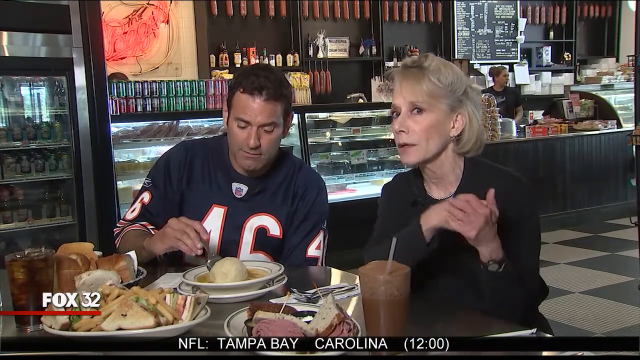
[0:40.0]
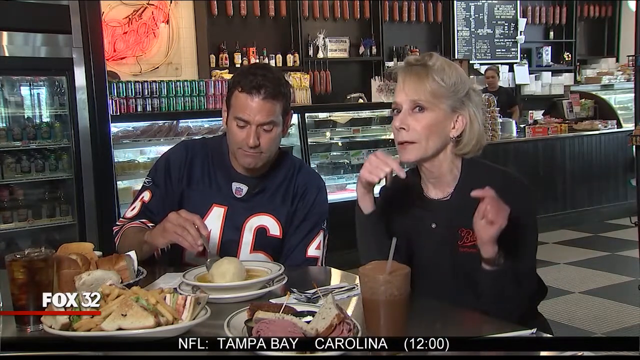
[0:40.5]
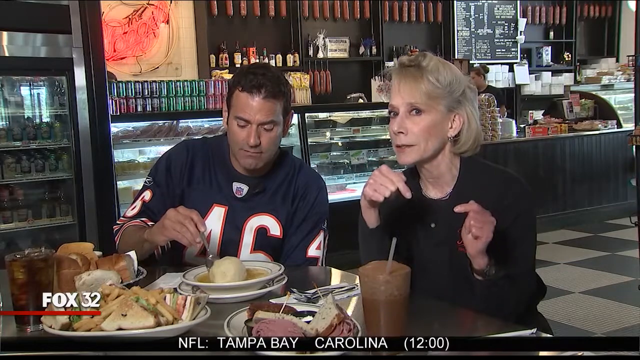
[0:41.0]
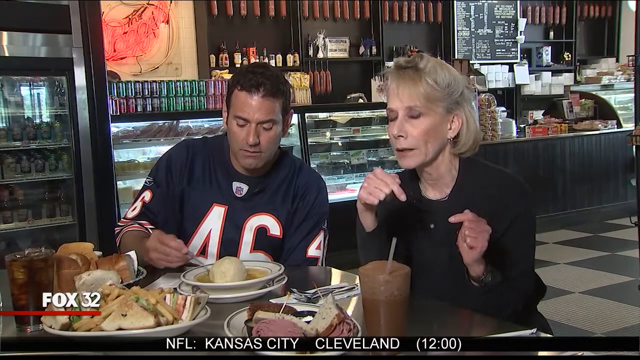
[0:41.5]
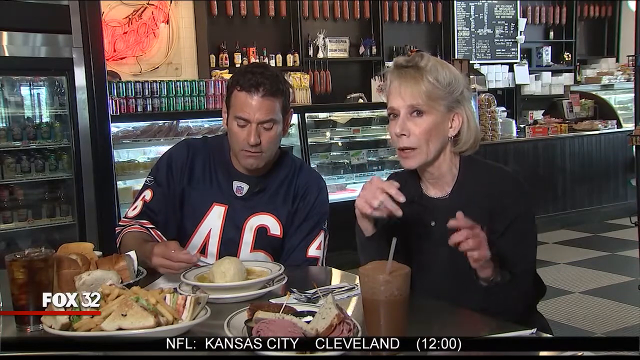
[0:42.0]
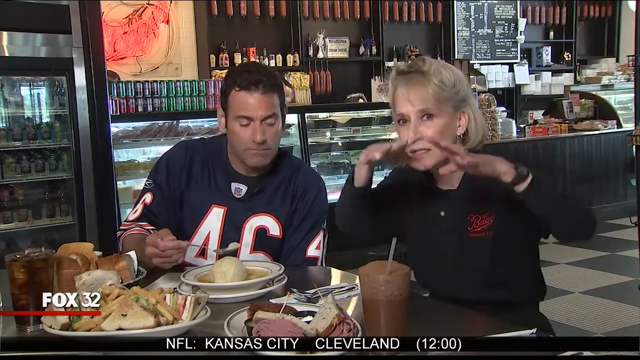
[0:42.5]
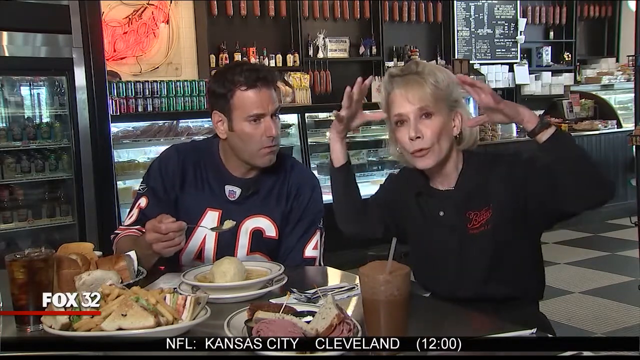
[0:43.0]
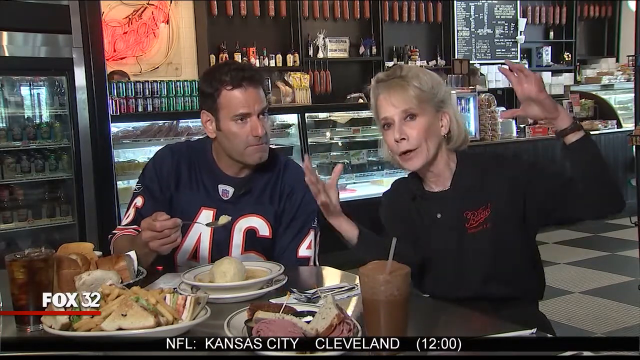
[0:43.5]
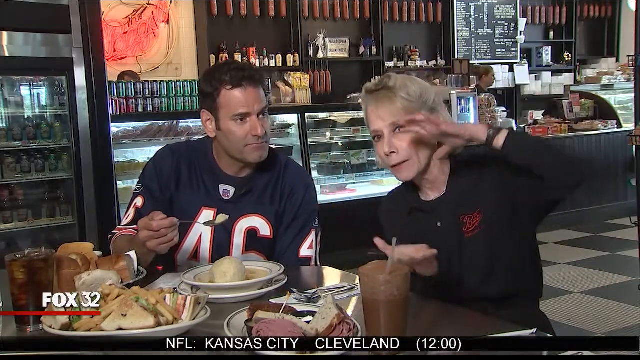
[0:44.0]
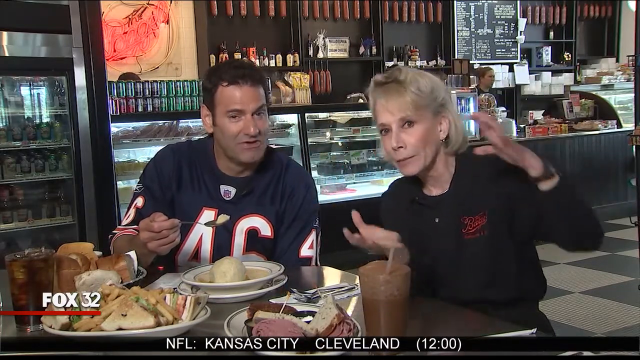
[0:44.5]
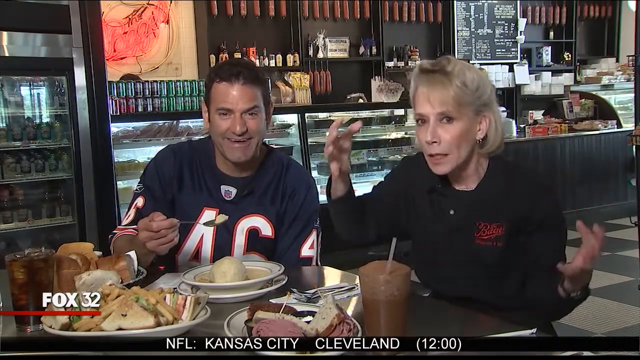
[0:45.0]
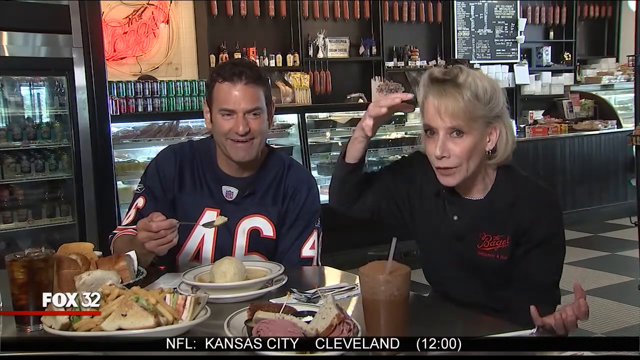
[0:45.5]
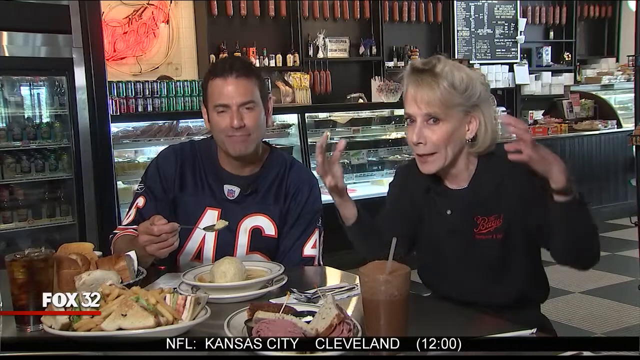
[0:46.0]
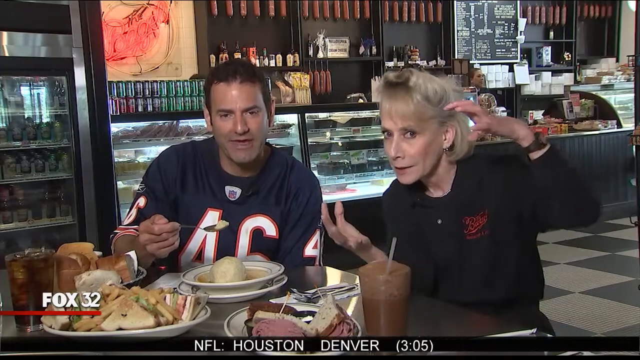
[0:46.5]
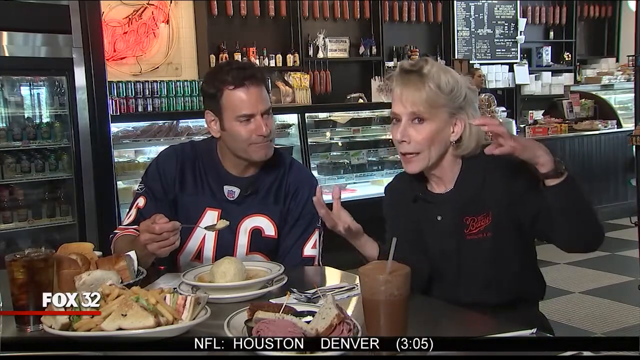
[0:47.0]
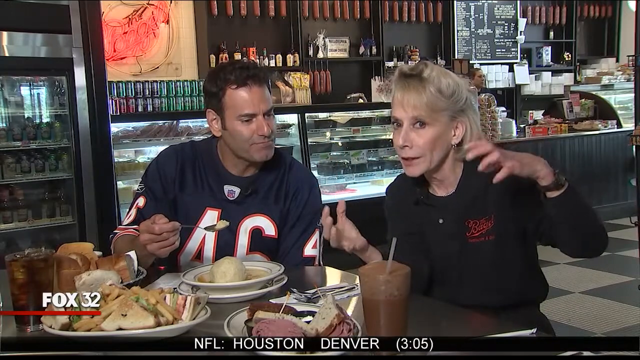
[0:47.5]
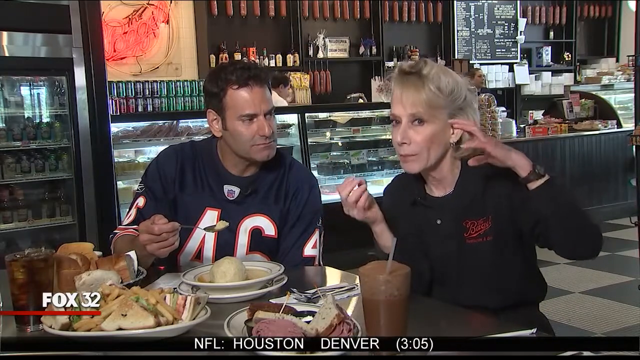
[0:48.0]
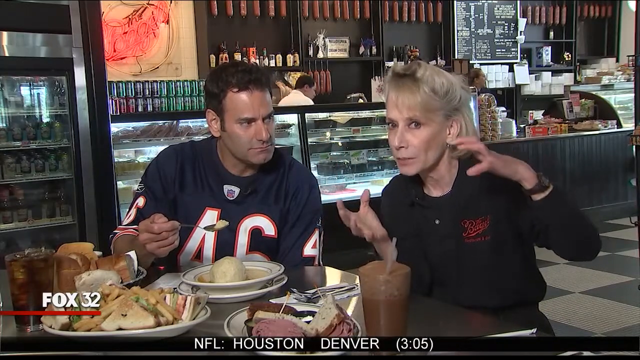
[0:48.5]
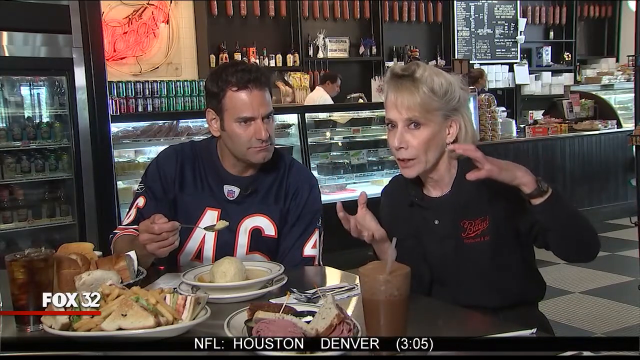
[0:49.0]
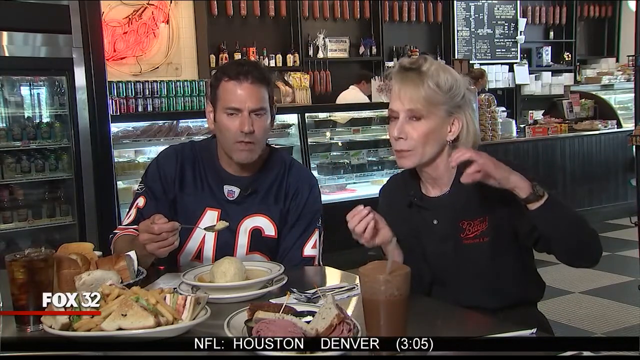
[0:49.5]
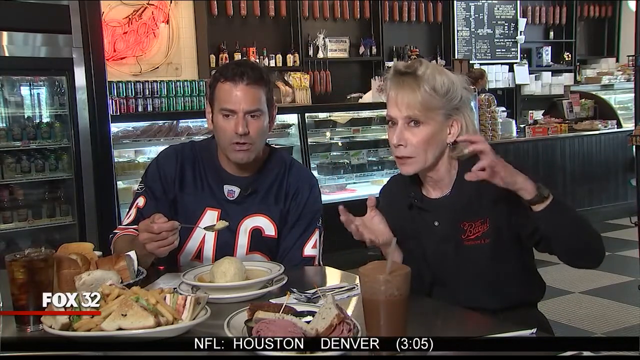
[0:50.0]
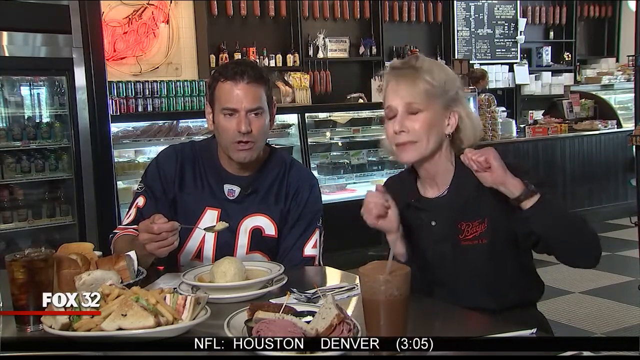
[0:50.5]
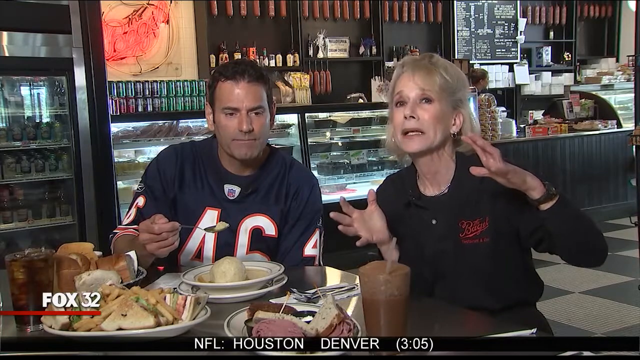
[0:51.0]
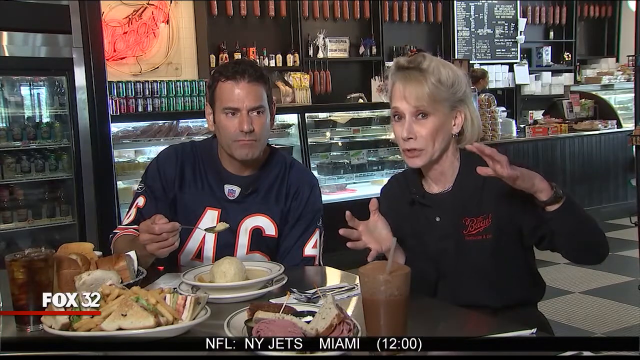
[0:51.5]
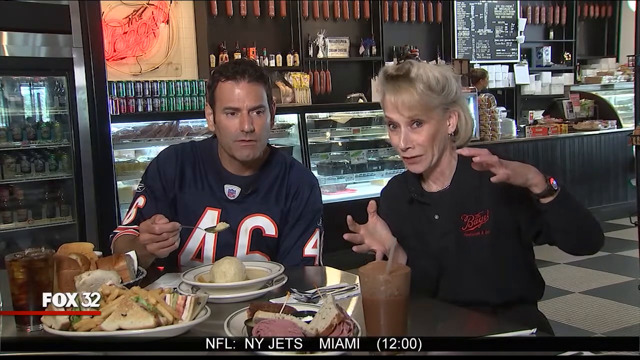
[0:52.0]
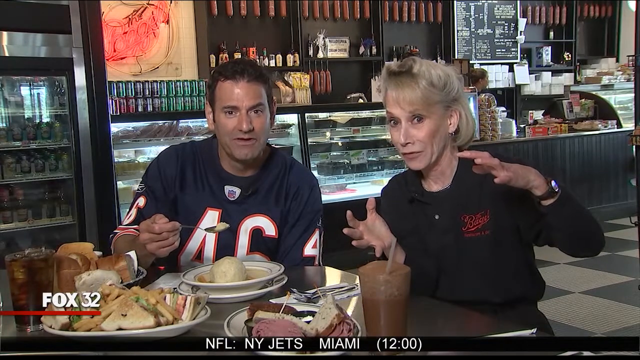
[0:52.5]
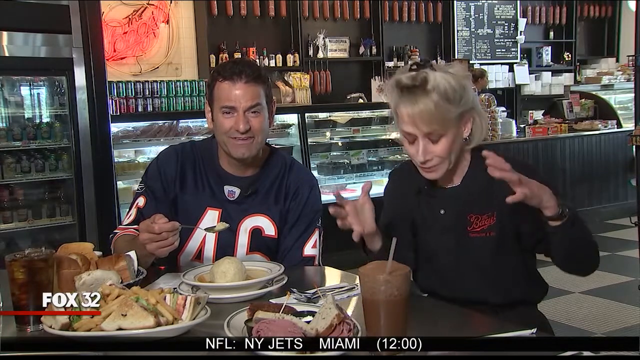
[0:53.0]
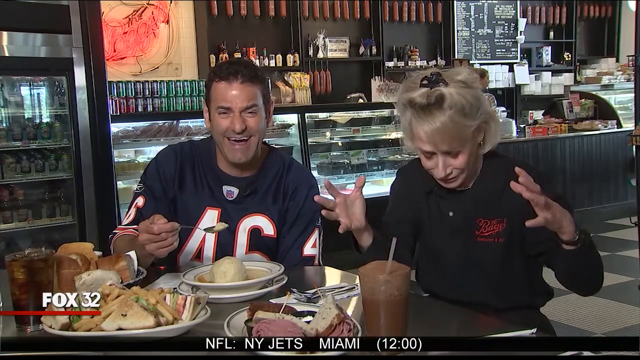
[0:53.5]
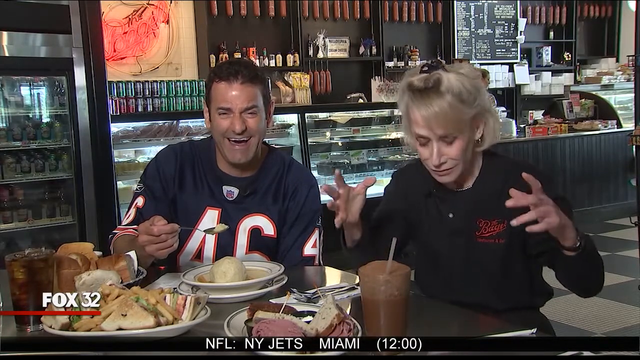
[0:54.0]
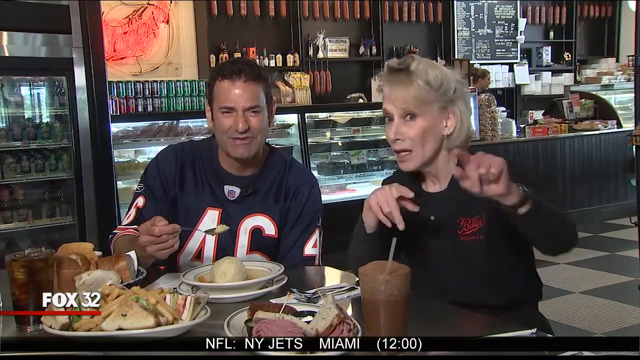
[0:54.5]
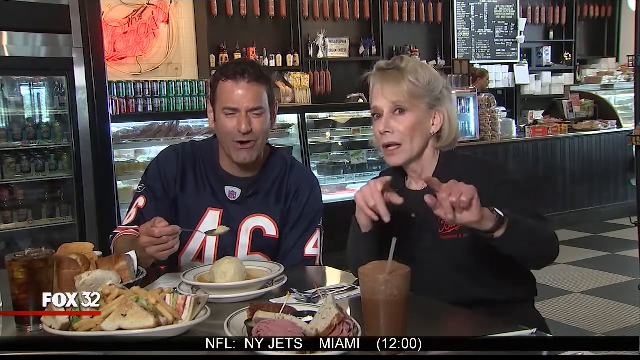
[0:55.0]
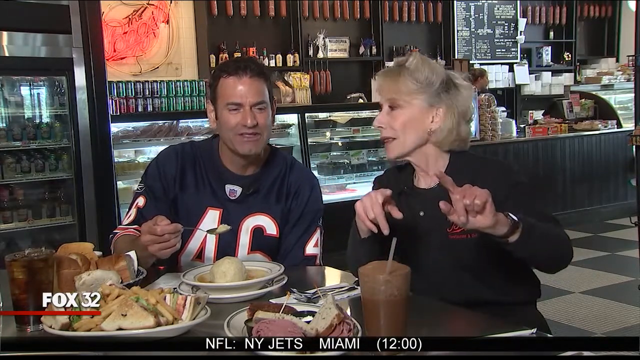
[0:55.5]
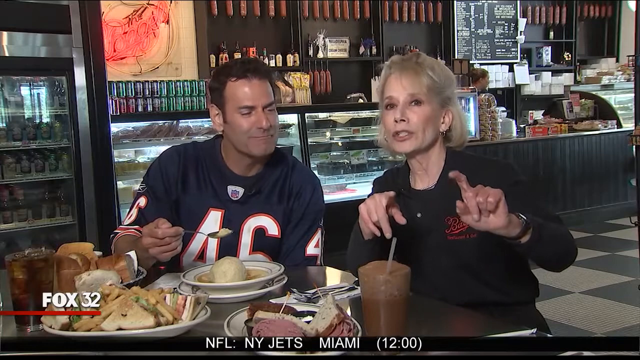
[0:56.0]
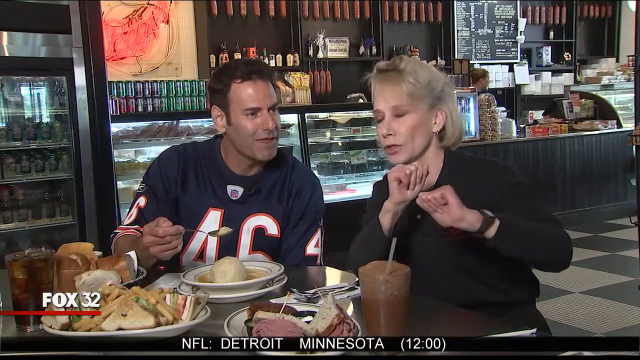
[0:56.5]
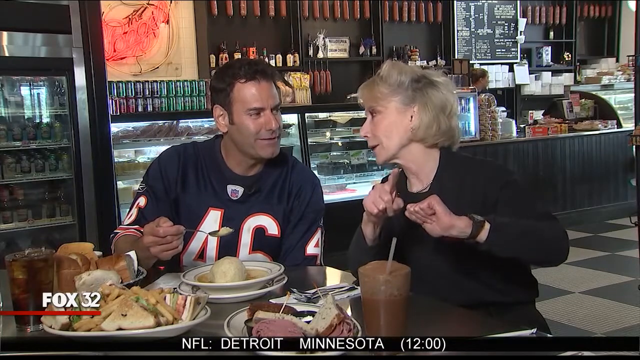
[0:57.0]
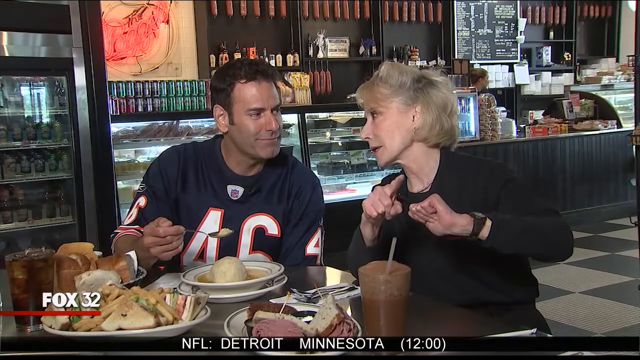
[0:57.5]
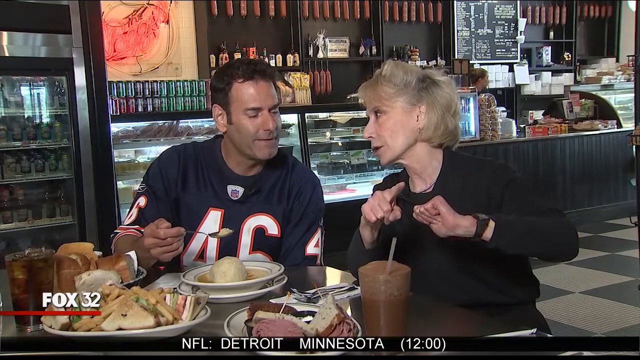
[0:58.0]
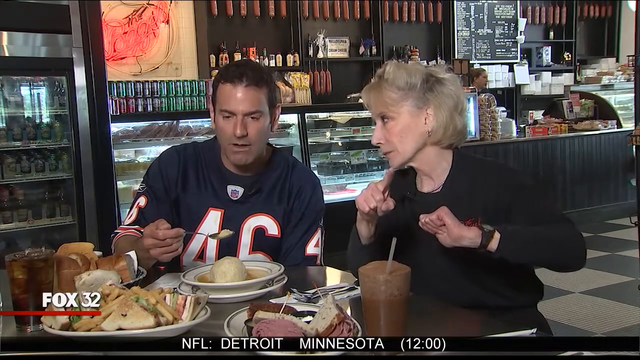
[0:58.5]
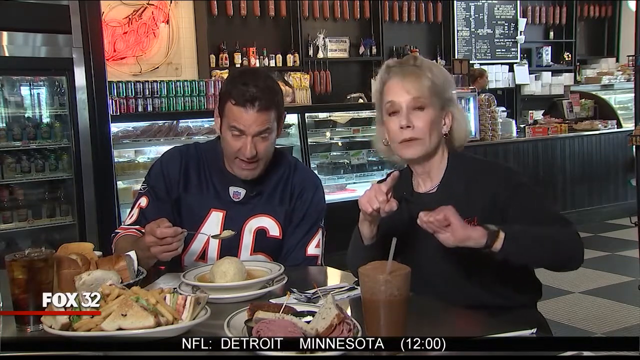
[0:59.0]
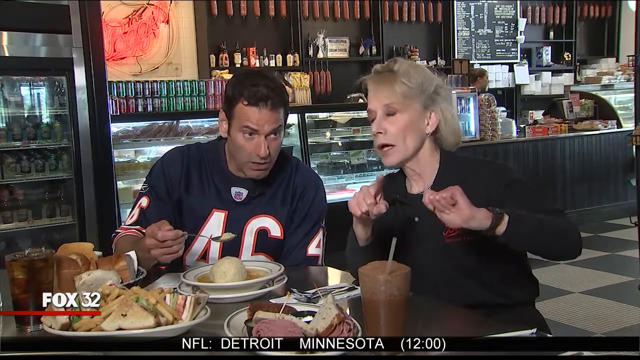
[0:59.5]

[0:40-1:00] Two people sit at a table full of food in a restaurant. The man on the left wears a navy football jersey with the number 46 on the front in white numbers with an orange outline. The woman to his left, on the right of the screen, wears a black chef's uniform with a red logo stitched on her left side; she has short white hair and looks to be older than him. The man eats while they talk. In the background is a counter with some food inside and drinks in cans on top, someone operating the cash register, and a black checkered floor, suggesting a cafe or restaurant. They talk to the camera, quite animated; the woman in particular talks with her hands a lot. The man eats as he talks, giving the impression they are discussing the food, and they seem to be talking about something positive.